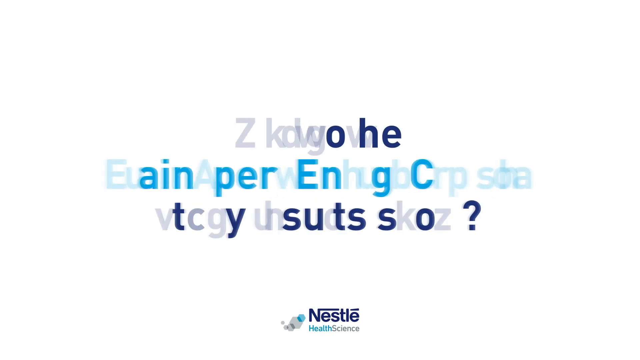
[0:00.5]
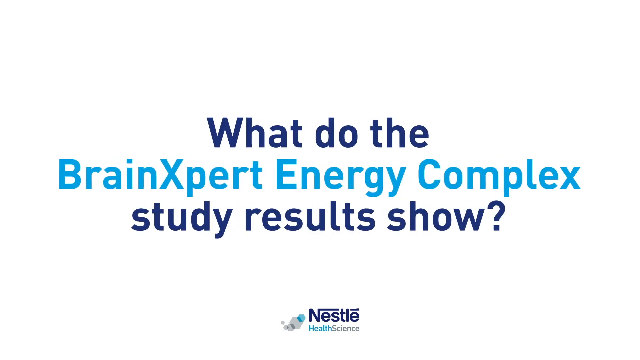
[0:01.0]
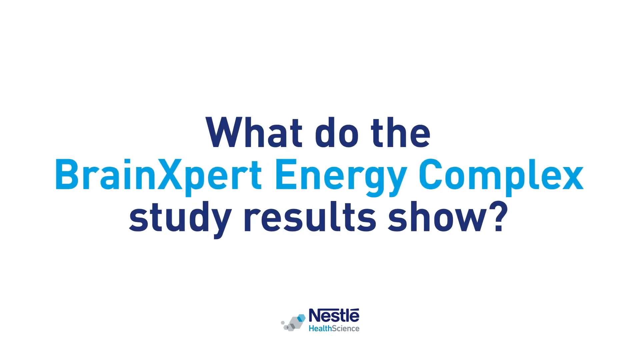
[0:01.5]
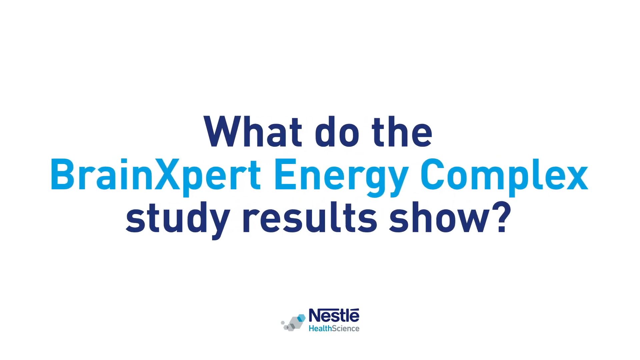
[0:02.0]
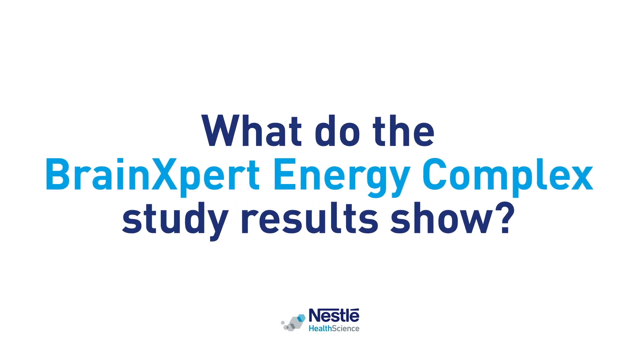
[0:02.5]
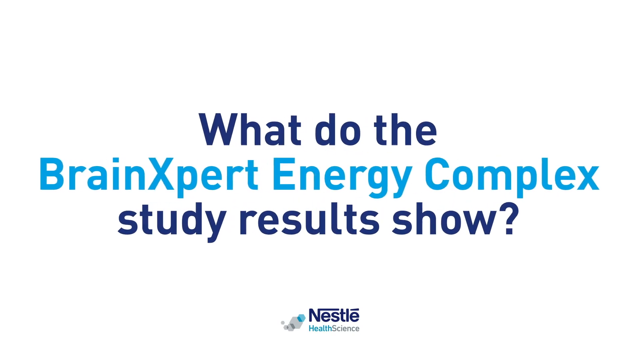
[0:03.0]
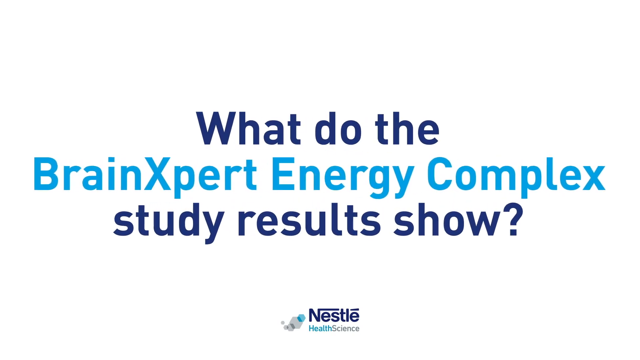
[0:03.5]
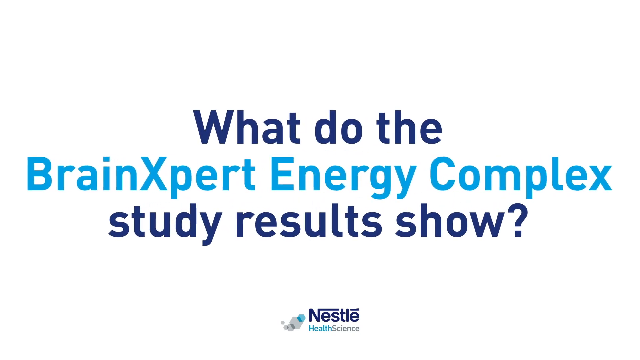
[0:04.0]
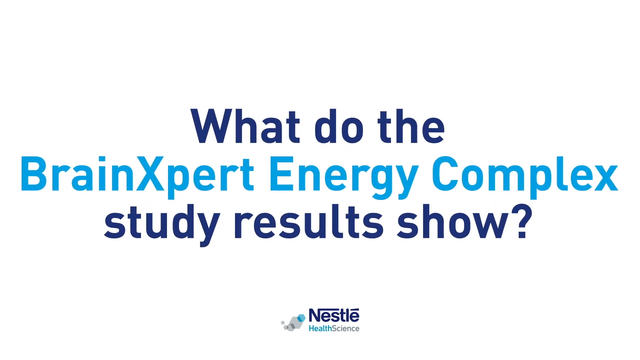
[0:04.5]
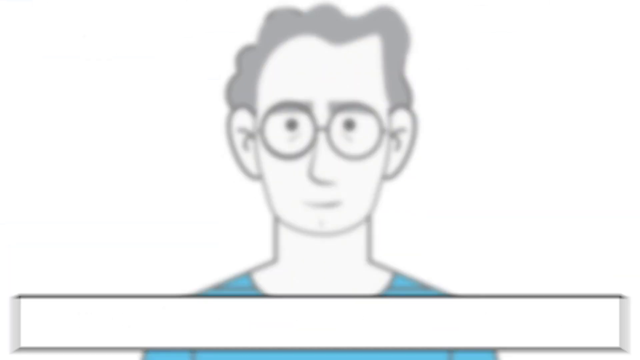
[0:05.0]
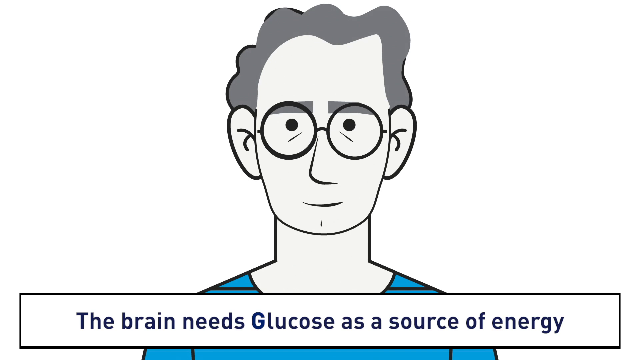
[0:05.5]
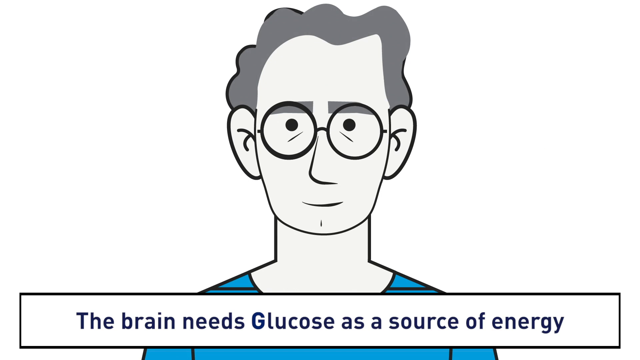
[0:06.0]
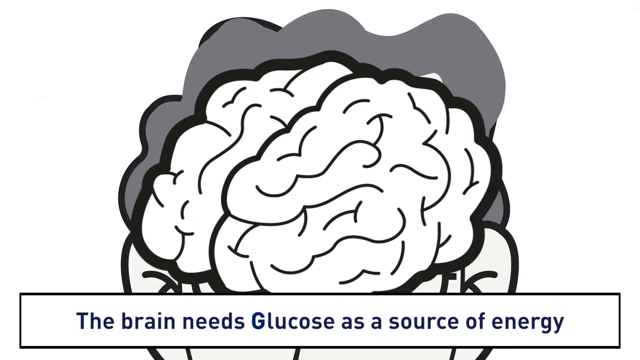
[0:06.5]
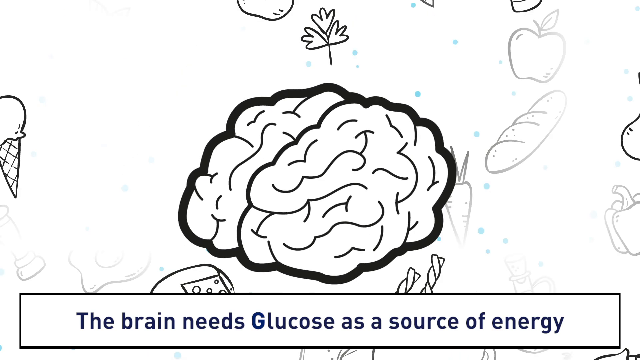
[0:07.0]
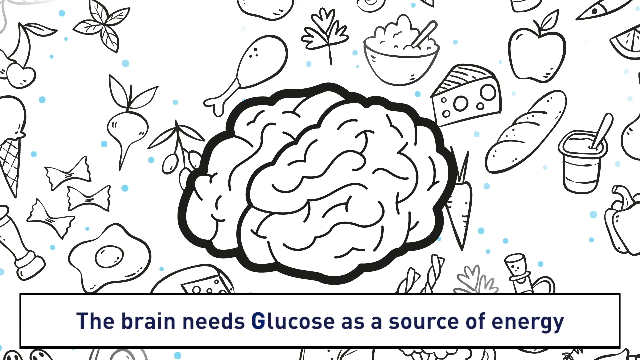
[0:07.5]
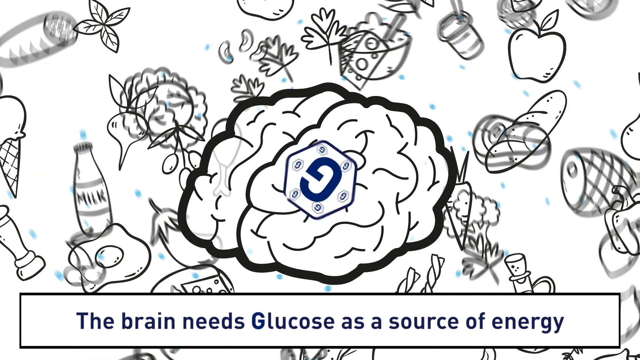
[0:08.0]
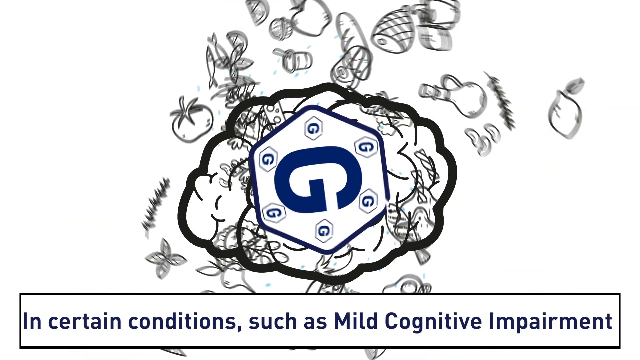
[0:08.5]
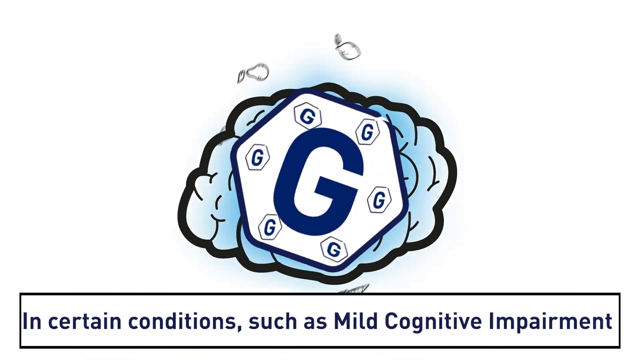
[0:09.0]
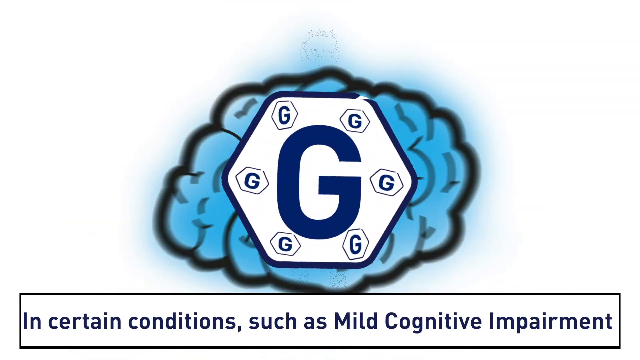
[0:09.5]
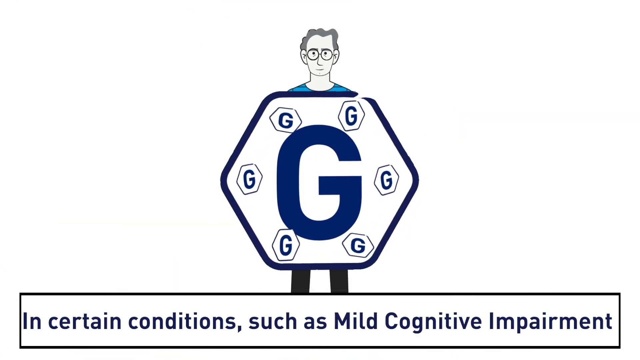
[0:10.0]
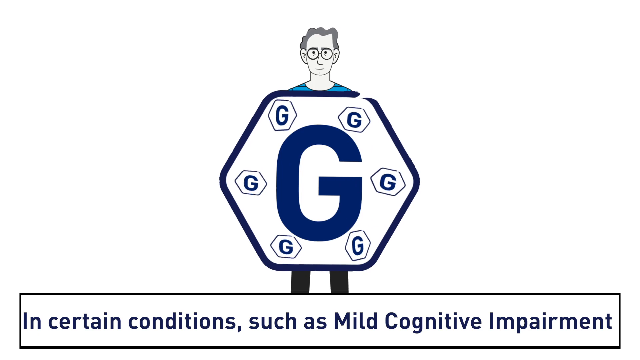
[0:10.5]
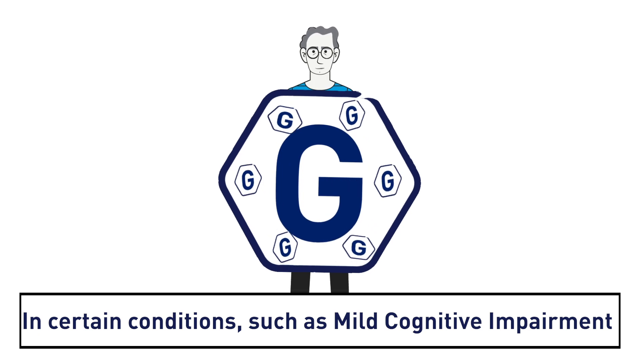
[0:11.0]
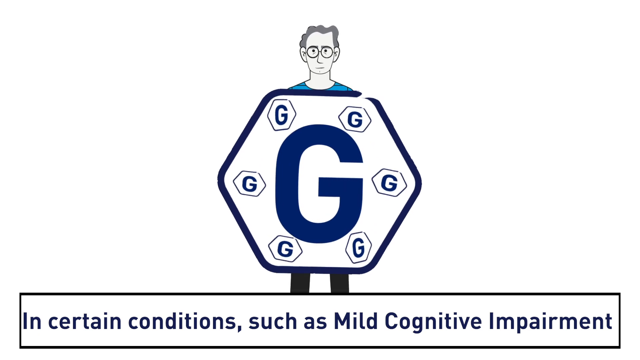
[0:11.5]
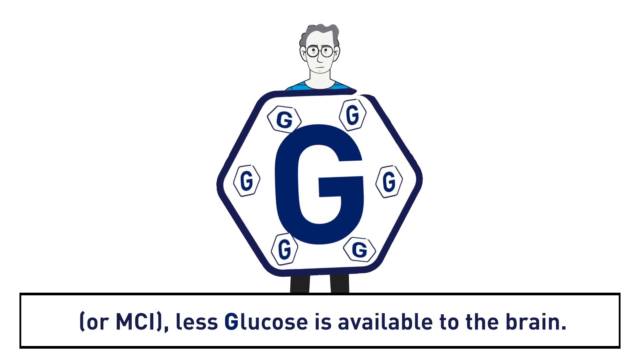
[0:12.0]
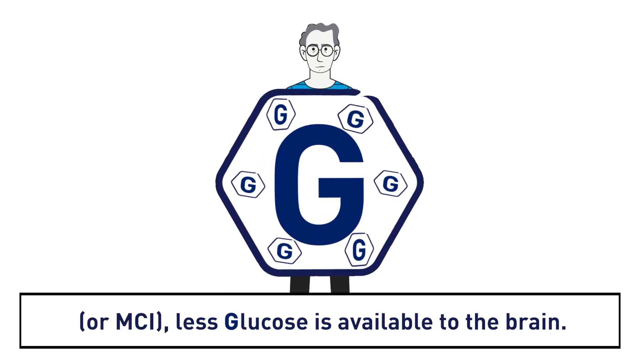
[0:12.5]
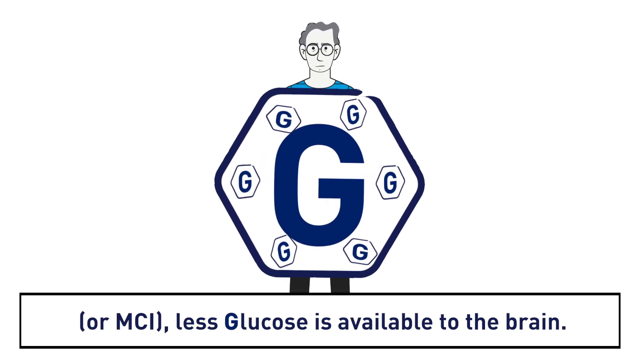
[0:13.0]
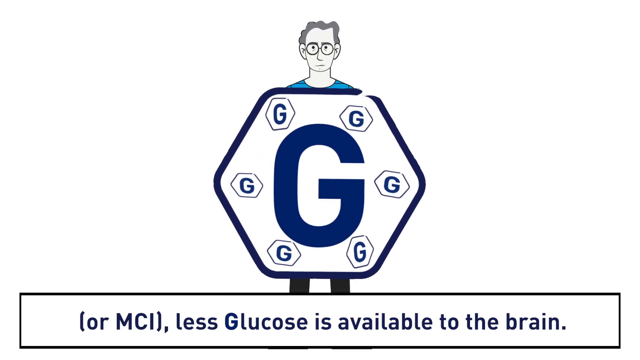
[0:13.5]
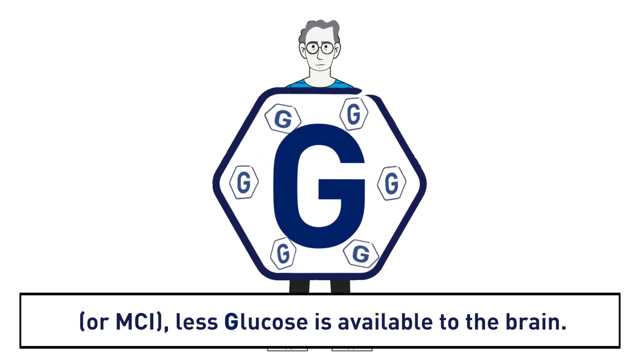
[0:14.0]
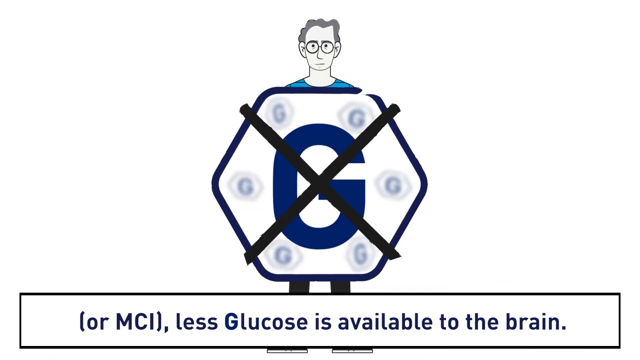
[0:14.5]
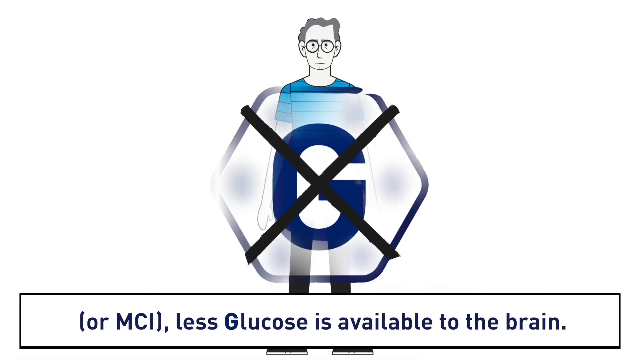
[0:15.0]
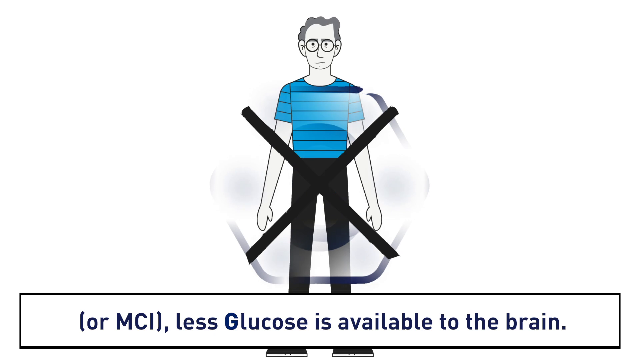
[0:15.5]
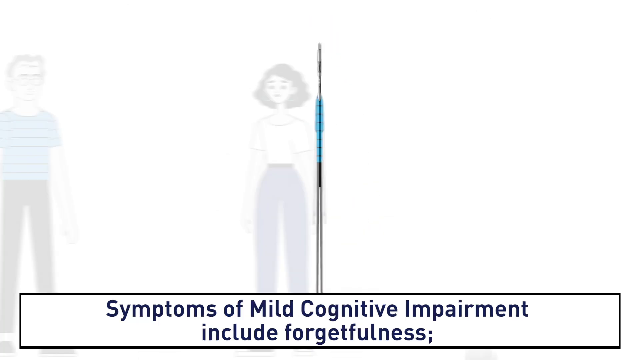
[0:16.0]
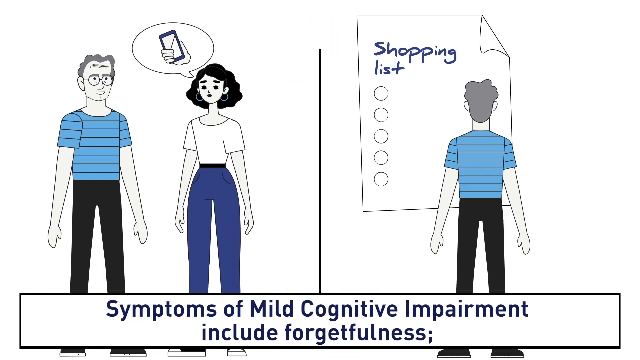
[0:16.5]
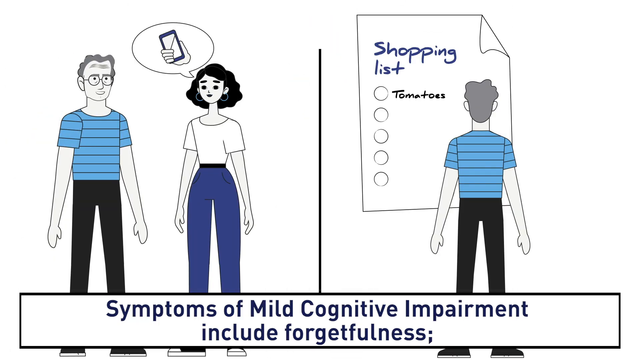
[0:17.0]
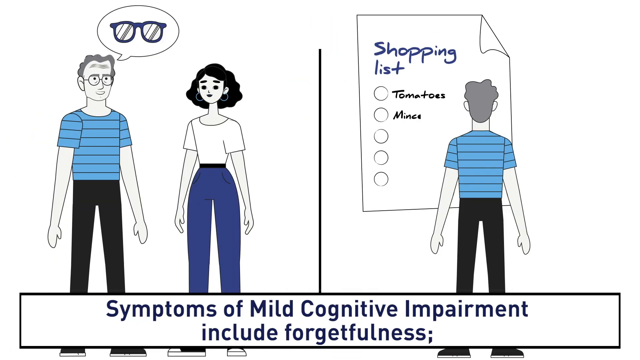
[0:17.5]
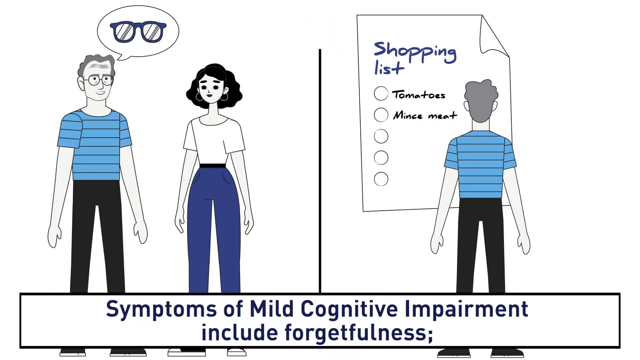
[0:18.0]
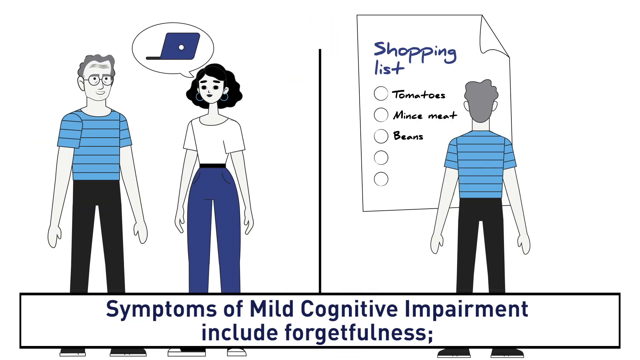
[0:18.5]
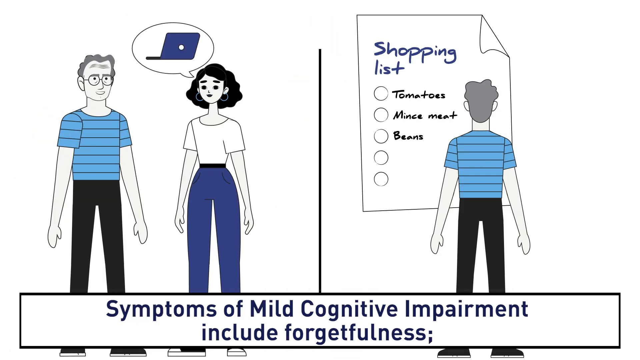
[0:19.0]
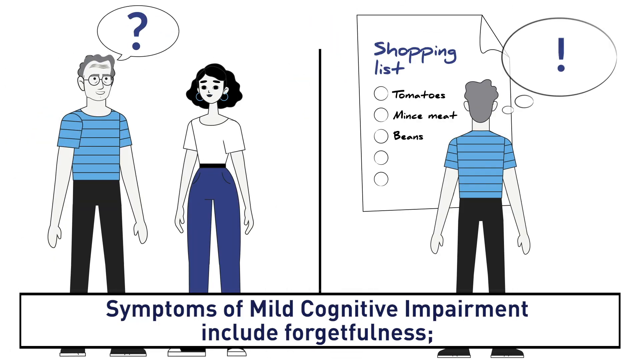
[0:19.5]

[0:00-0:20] This is an advertisement by Nestle. It opens on a screen that says "what do the brain expert energy complex study results show?" with "Nestle Health Science" at the bottom. Next comes an animation of a male human wearing glasses, with the text "the brain needs glucose as a source of energy" at the bottom. The view zooms in on the person's head and goes inside to show the brain, a black-and-white drawing. All around it are turnips, grapes, cherries, pie, bagels or rolls, carrots, twisted candy, bell peppers, watermelon slices, leaves of various types and ice cream. Everything spins around, and a big letter G in a hexagon forms in the center of the image, covering the male's body; there is the big letter G plus six smaller G's inside little hexagons. The bottom text reads "in certain conditions such as mild cognitive impairment", and all the G's start wiggling around the screen. The bottom then says "for MCI, less glucose is available to the brain", and a big X comes across the big letter G in the hexagon. The scene then splits in half. On the left are a male and a female: the male wears black pants and a blue striped shirt with horizontal black lines; the woman wears blue pants and a white short-sleeved shirt and hoop earrings, and she is talking about a cell phone, with a speech bubble above her head. On the right is the same male facing the other direction, seen from the back, looking at a shopping list whose first item says "tomatoes". The bottom text reads "symptoms of mild cognitive impairment include forgetfulness". After "tomatoes" the list says "mince meat" and then "beans", and on the left the male has a speech bubble with a picture of sunglasses.